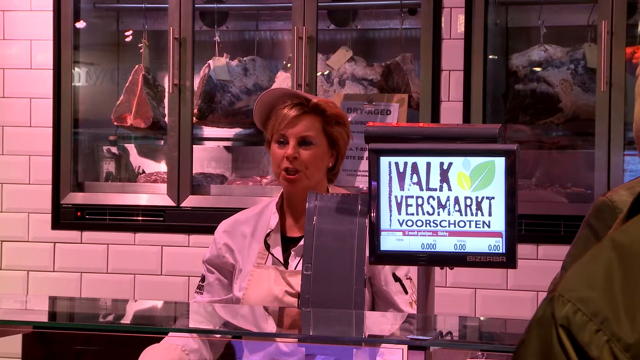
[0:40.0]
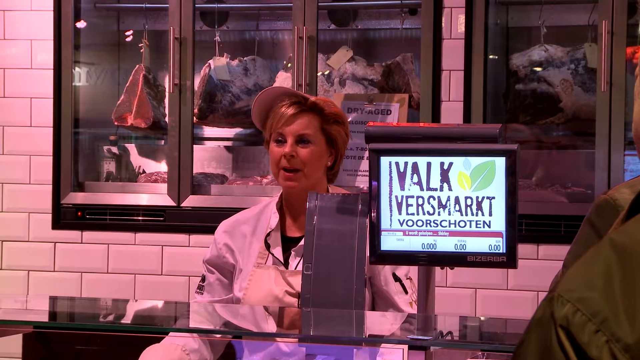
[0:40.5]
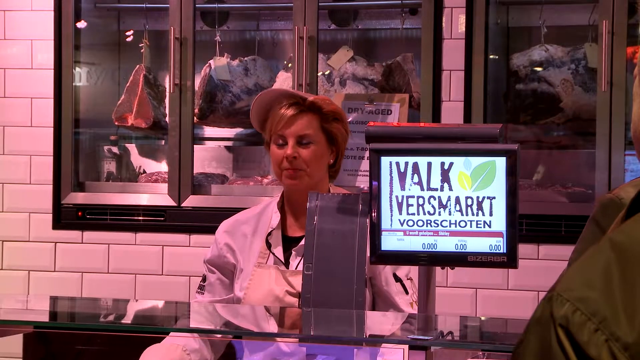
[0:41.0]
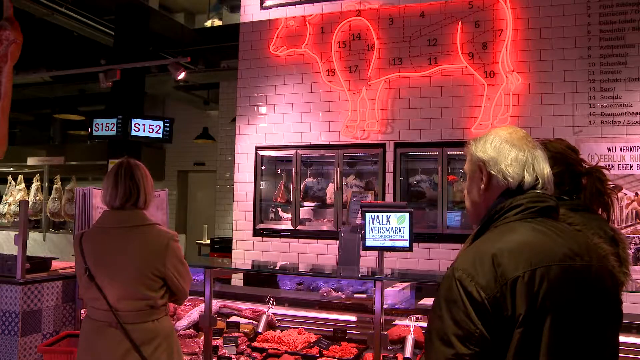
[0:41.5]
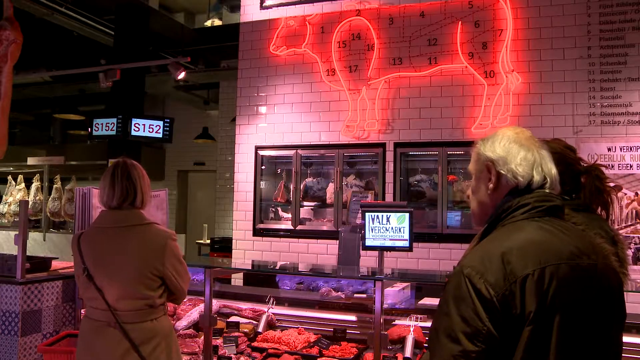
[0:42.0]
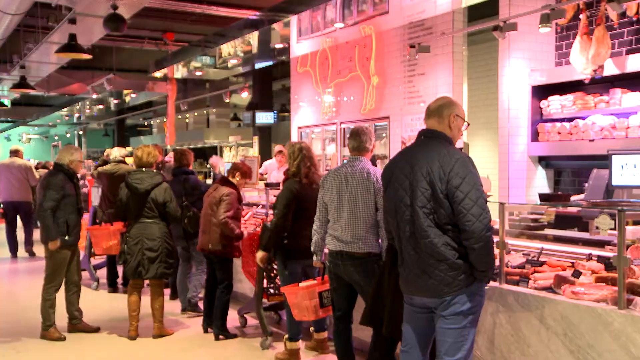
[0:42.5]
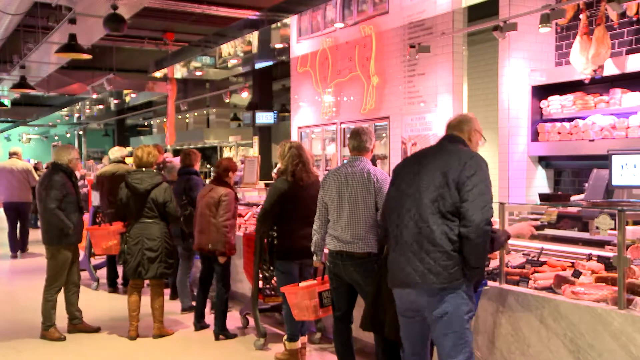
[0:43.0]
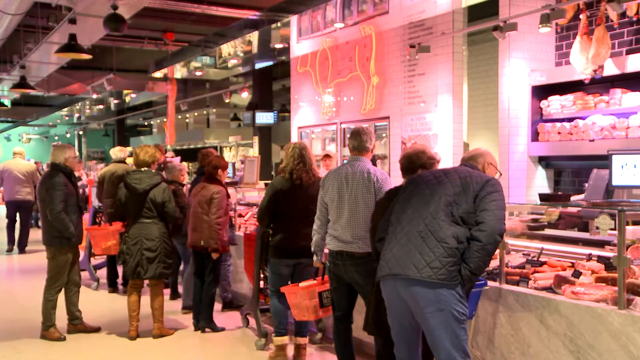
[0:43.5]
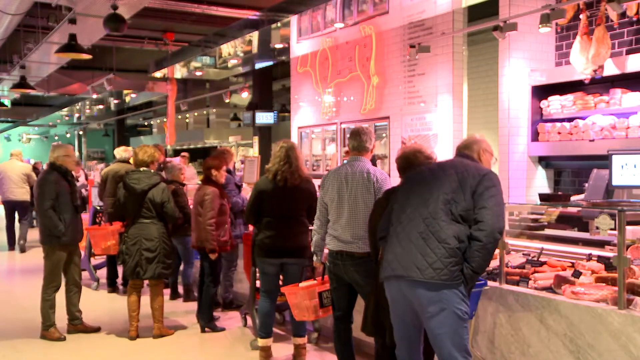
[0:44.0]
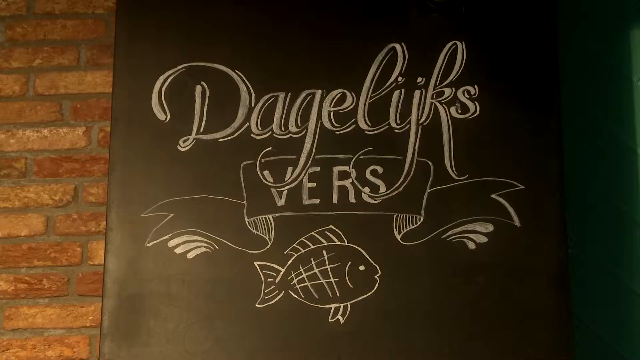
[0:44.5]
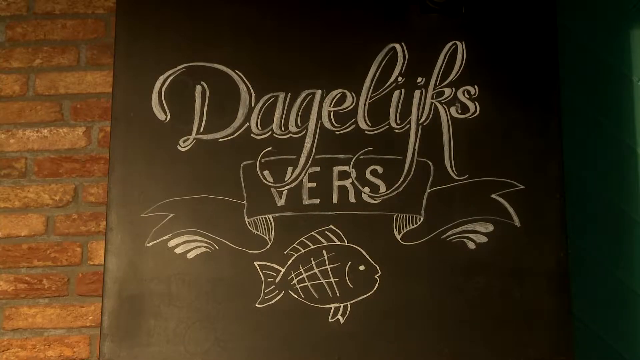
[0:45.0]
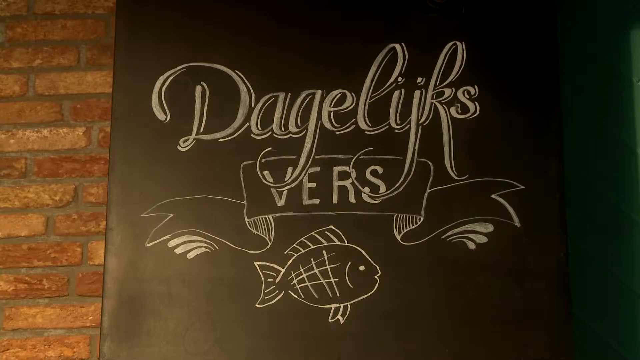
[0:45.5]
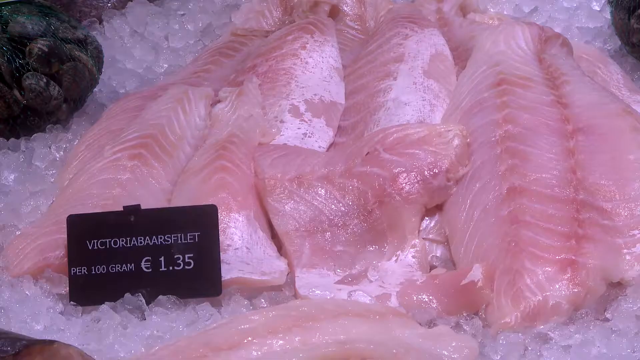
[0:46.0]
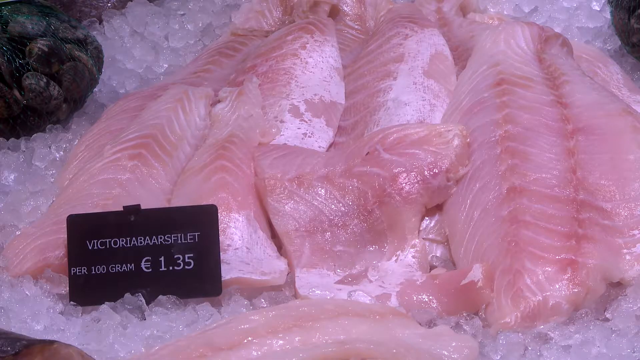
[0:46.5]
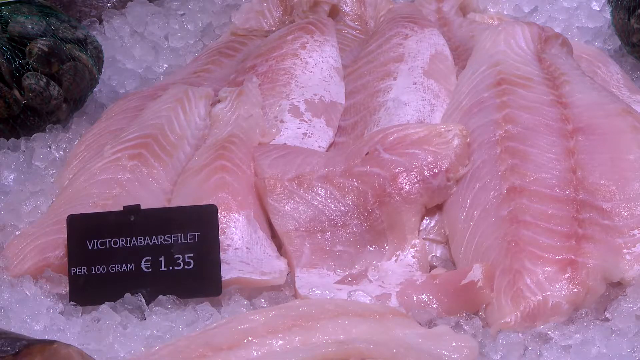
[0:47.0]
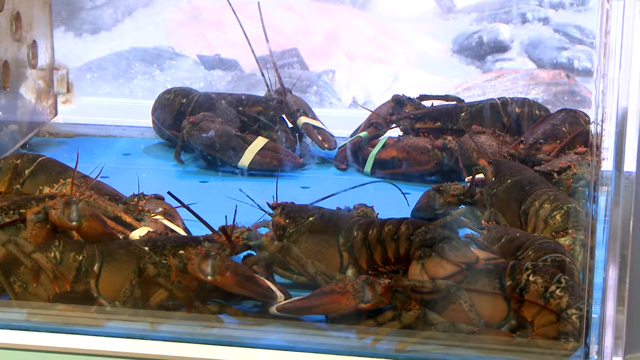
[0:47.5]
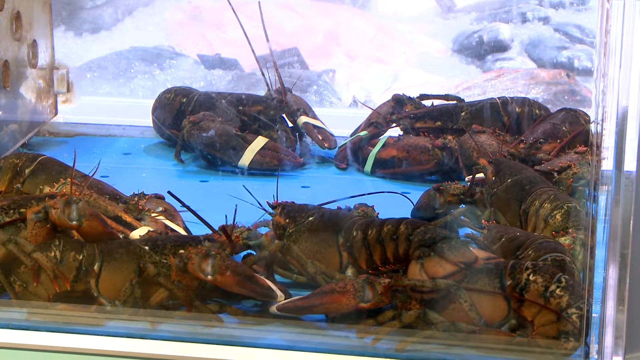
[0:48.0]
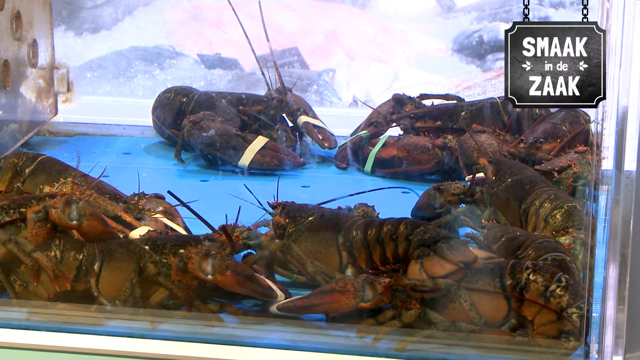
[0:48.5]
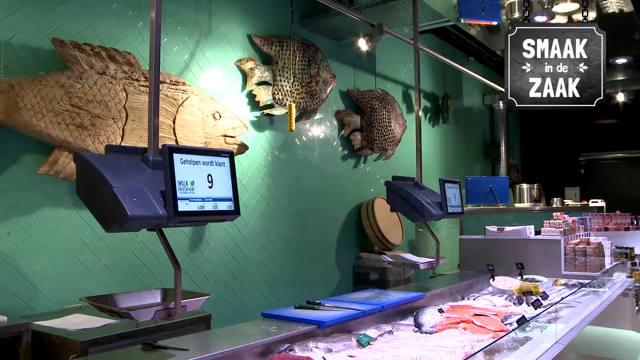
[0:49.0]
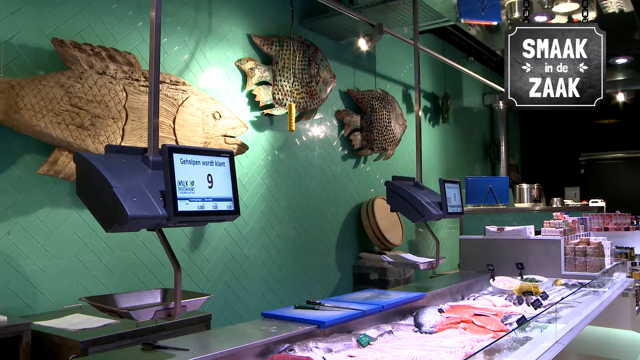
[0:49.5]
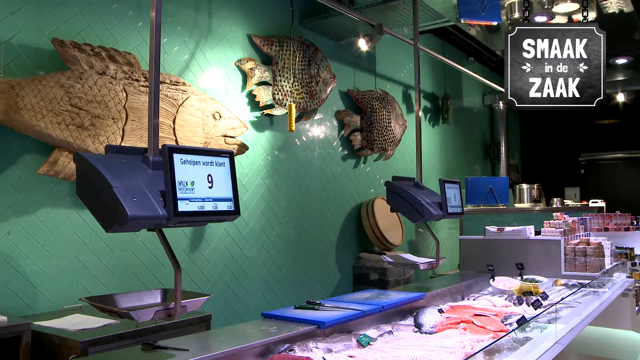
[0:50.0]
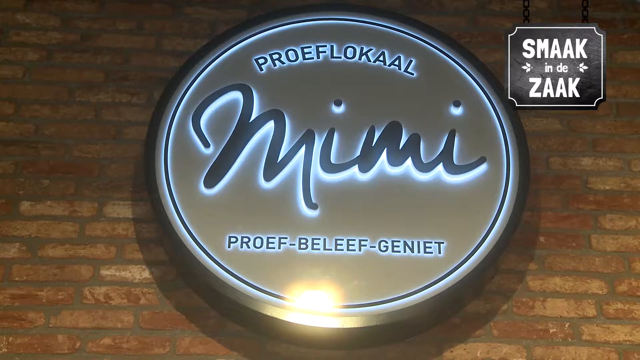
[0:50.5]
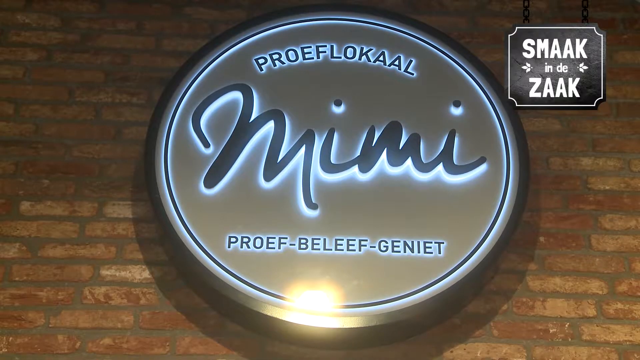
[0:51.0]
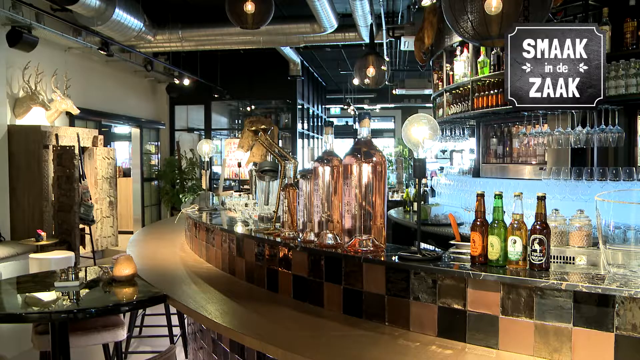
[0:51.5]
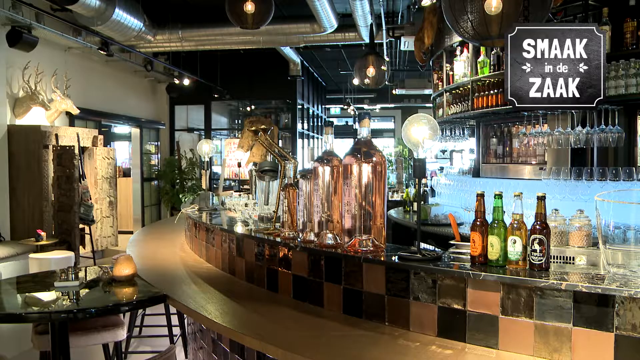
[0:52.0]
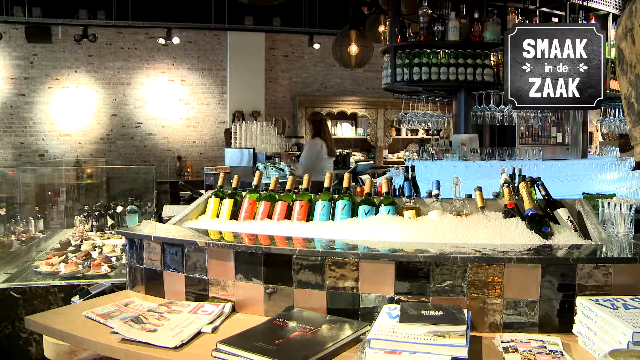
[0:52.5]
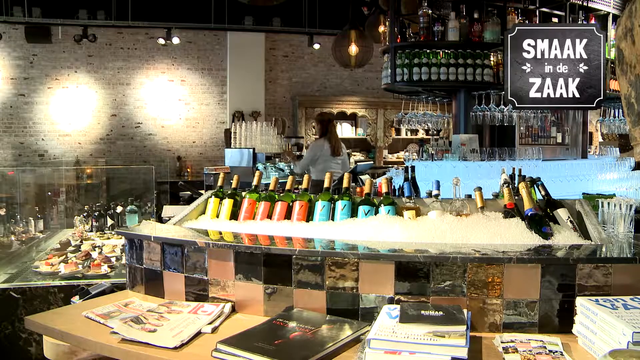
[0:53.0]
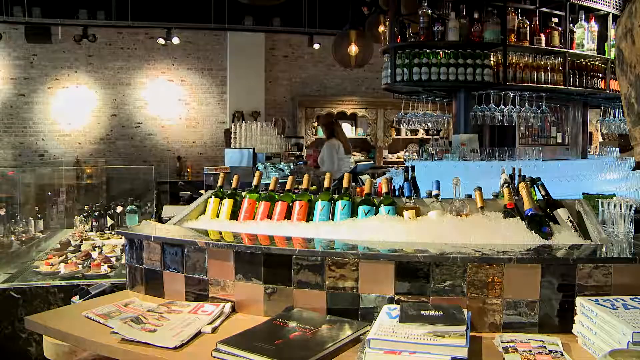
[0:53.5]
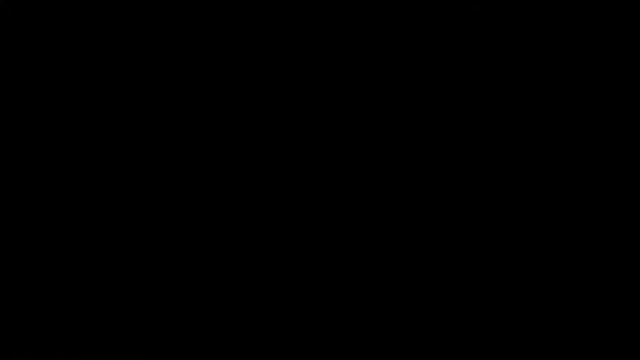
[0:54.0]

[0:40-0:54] A woman working at one of the small shops in the larger market wears a baseball cap and an apron and speaks to a customer. A small line of customers grows into a big line, and the customers seem to be mostly older adults. People point at different items. Close-ups show different types of fish and different restaurants, a bar appears, and quick short clips show the various restaurants, cafes and shops in the larger shopping center or market.